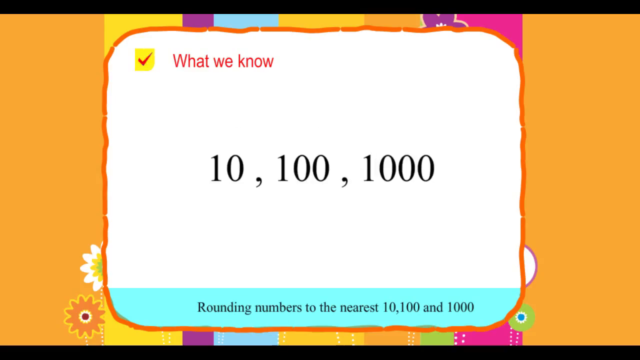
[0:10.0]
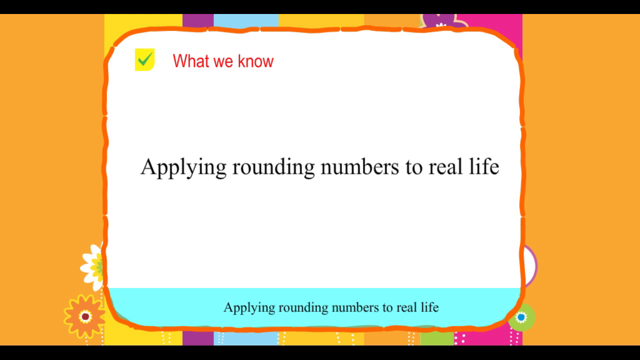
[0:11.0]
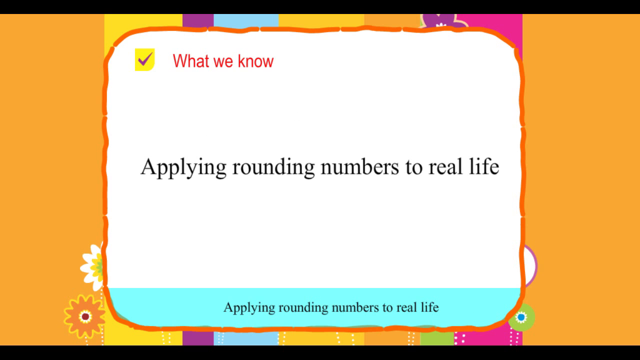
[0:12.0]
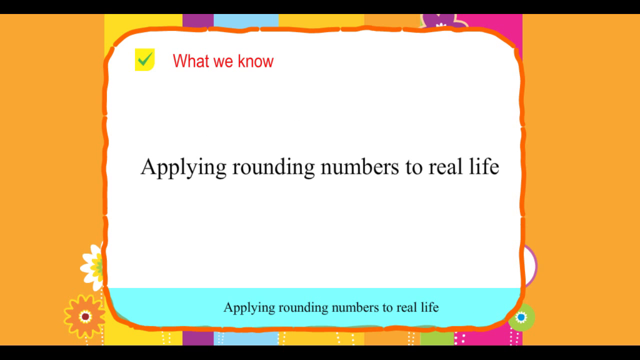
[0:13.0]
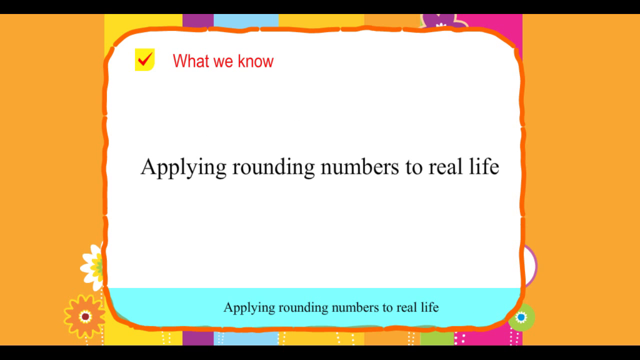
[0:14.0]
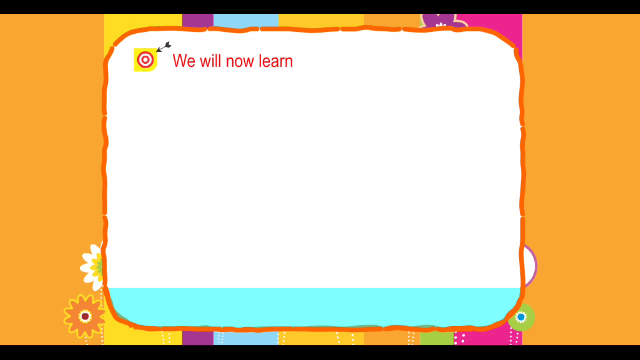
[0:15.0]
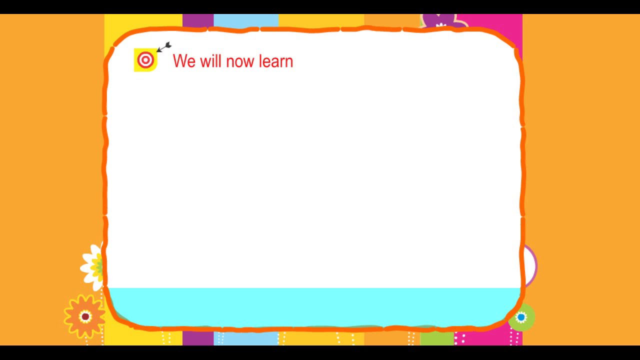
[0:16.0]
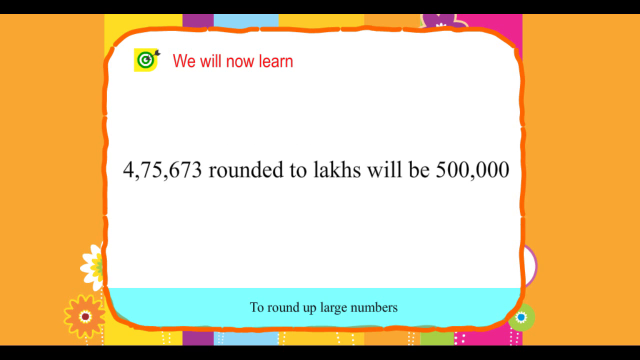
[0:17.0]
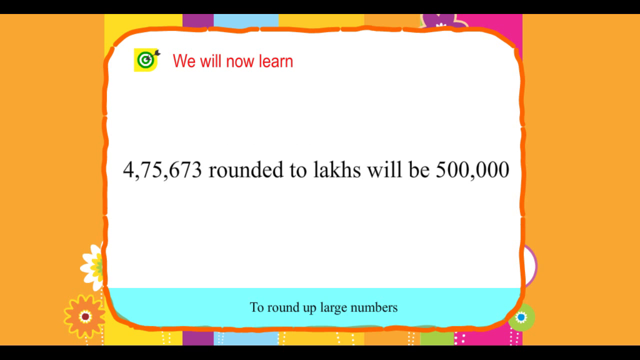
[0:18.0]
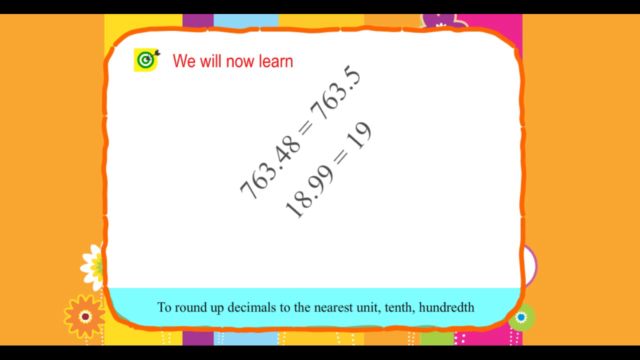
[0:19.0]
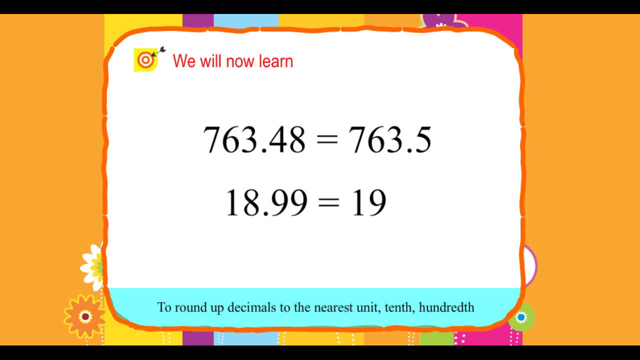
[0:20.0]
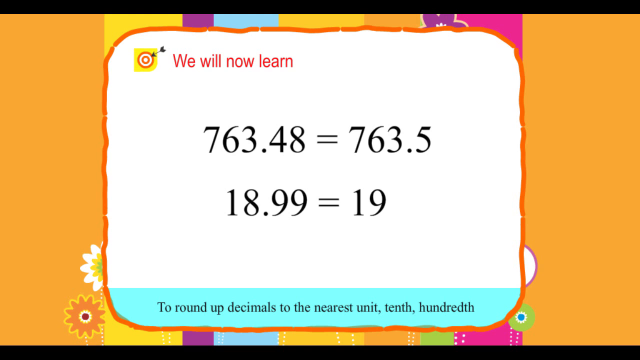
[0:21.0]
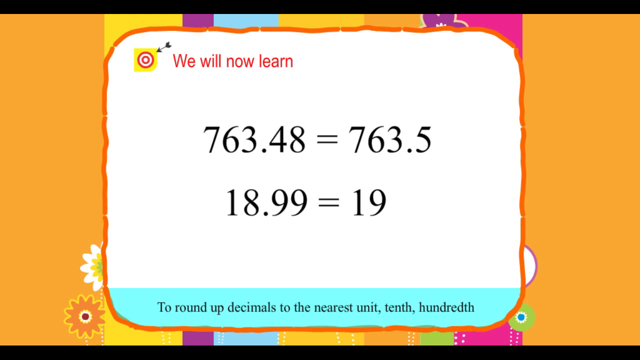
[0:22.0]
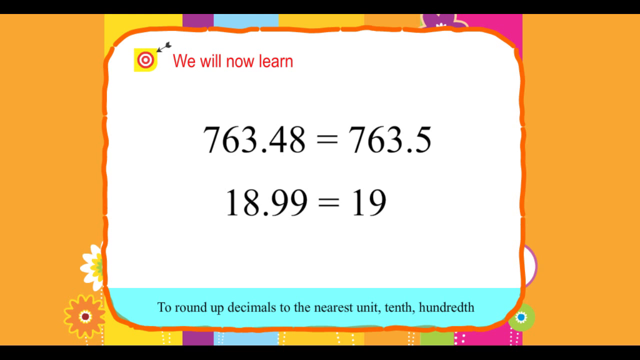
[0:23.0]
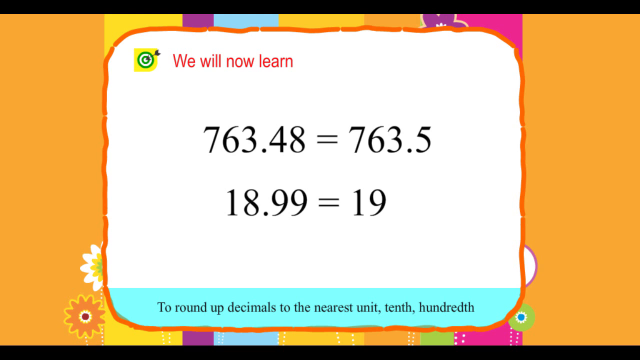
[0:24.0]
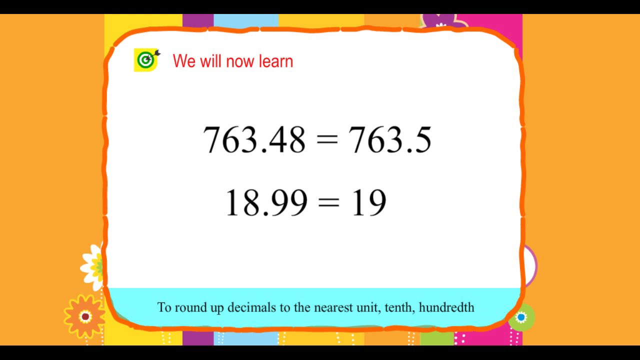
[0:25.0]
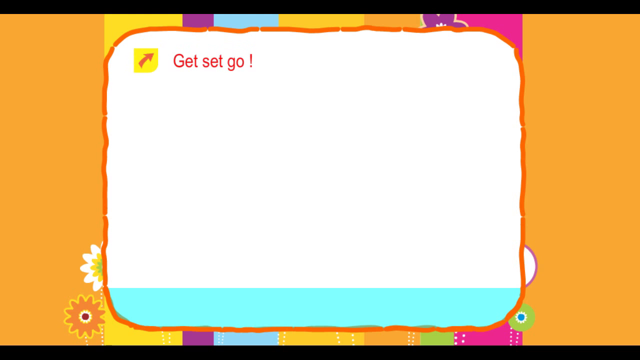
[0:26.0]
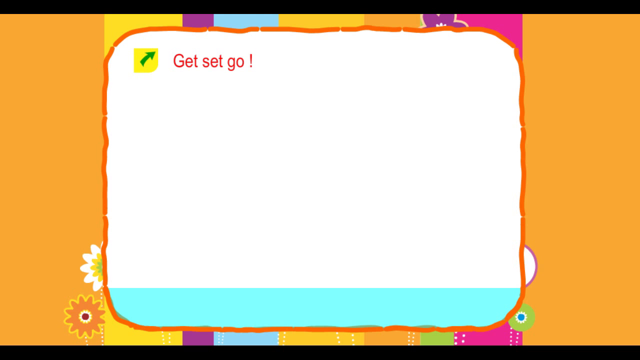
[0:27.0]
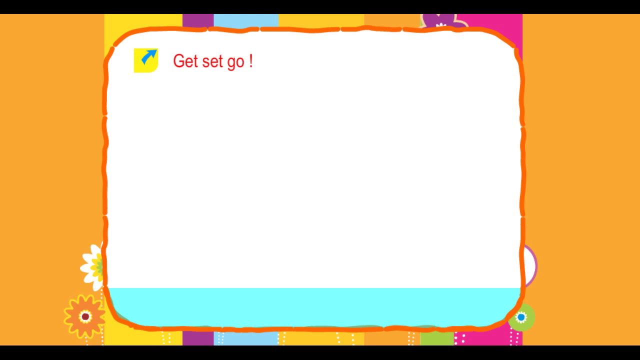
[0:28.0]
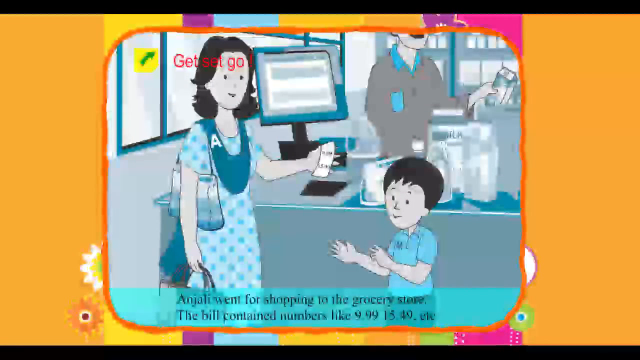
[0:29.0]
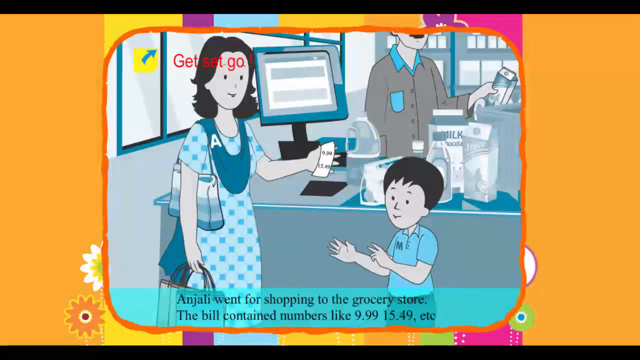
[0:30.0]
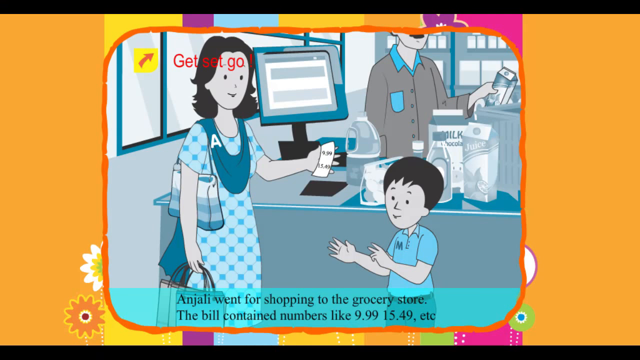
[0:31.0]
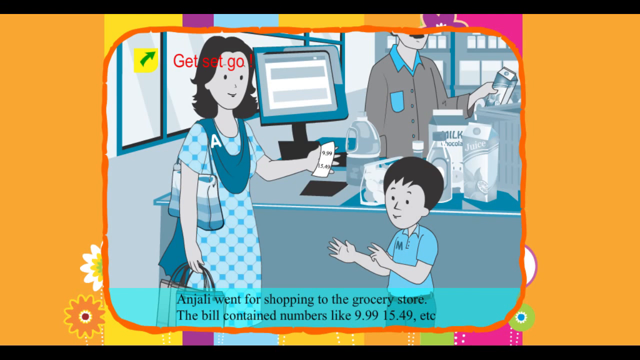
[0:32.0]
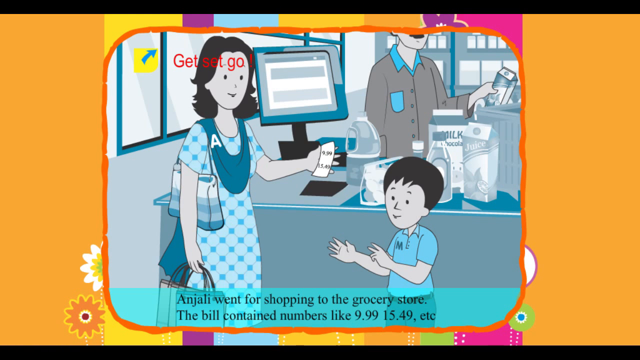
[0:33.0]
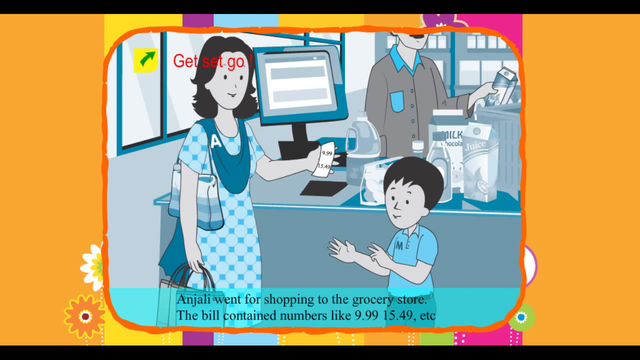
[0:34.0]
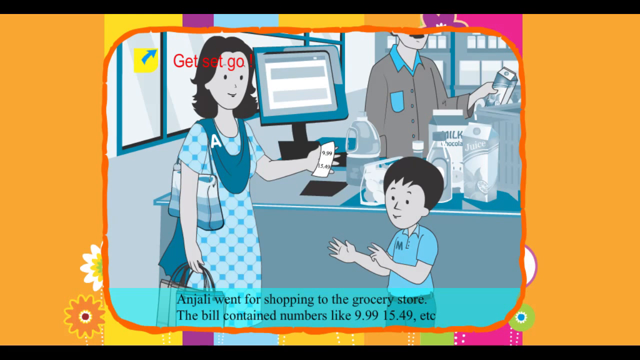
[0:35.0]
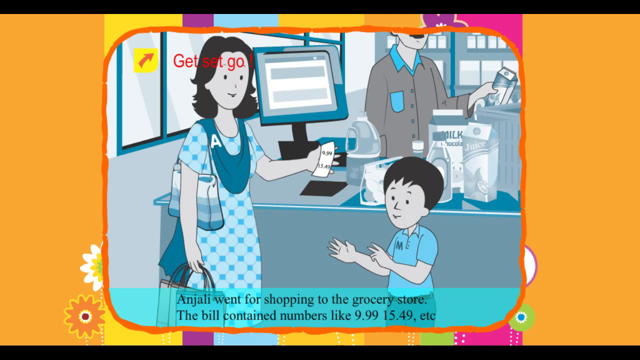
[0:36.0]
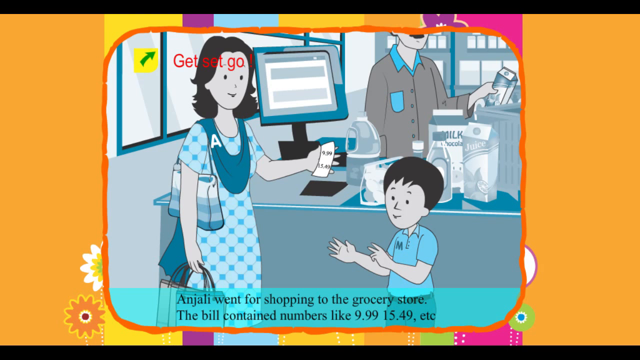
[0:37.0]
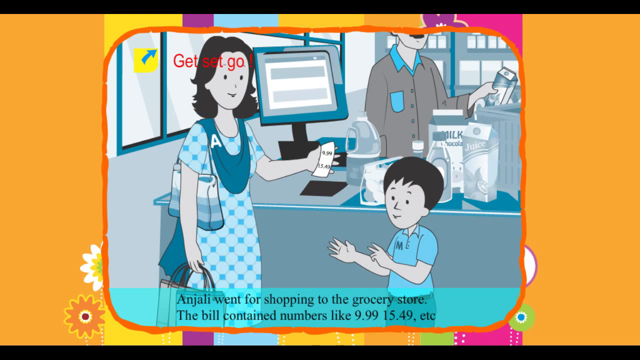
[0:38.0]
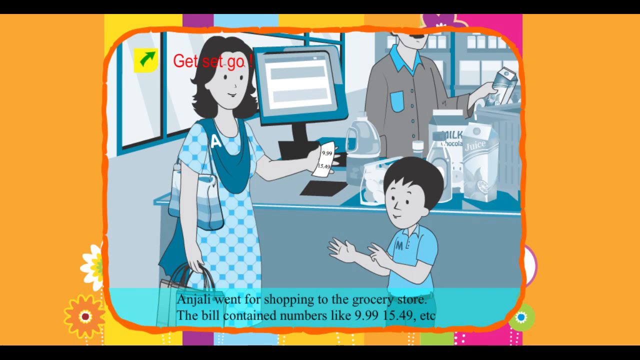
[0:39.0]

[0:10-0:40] The topic of rounding off numbers is shown on screen, along with the subtitle "what we know". Next, 100,000 appears on screen with the statement "rounding numbers to the nearest 100,000". Another pop-up follows with several different subtitles, in a font reading "applying rounding numbers", and then the same statement appears in a blue stroke. Next, the words "we will now learn" appear, and the tick symbol changes to a target. A cartoon of a mother and a child then appears.